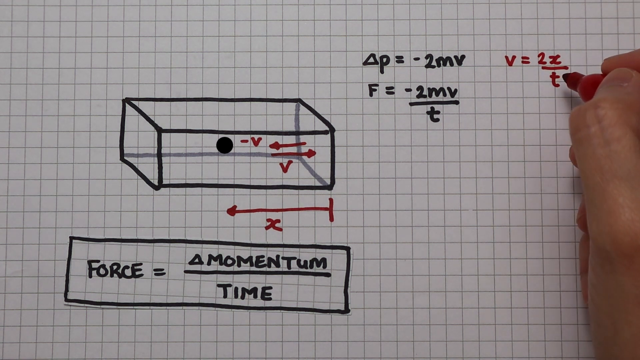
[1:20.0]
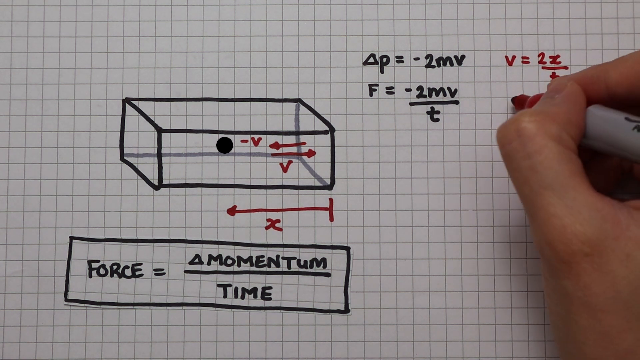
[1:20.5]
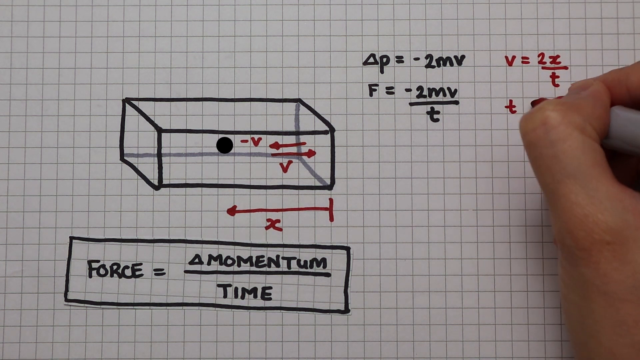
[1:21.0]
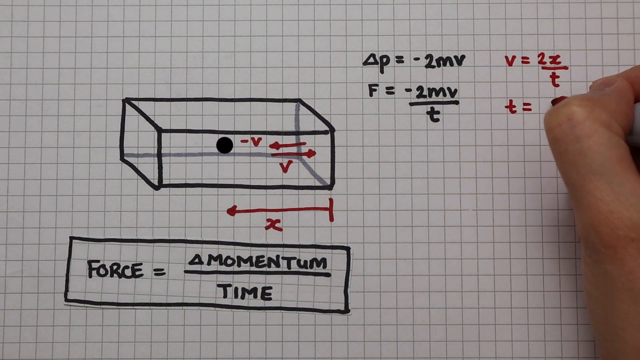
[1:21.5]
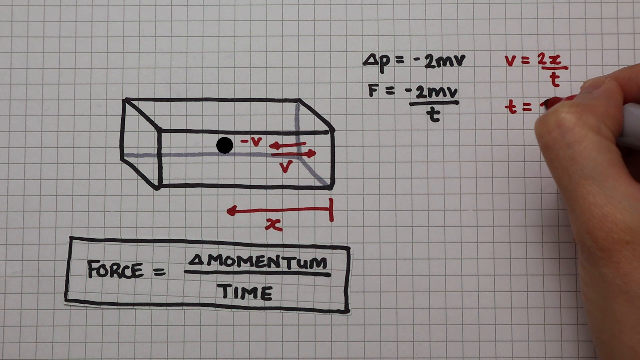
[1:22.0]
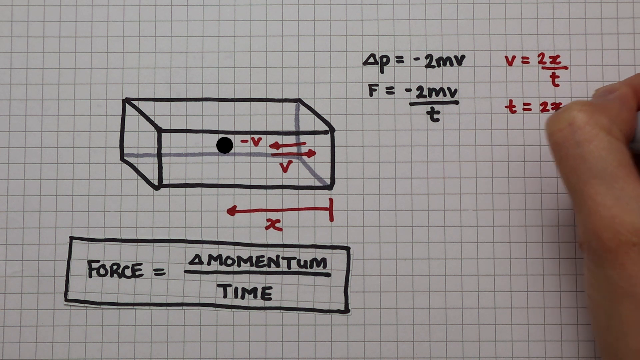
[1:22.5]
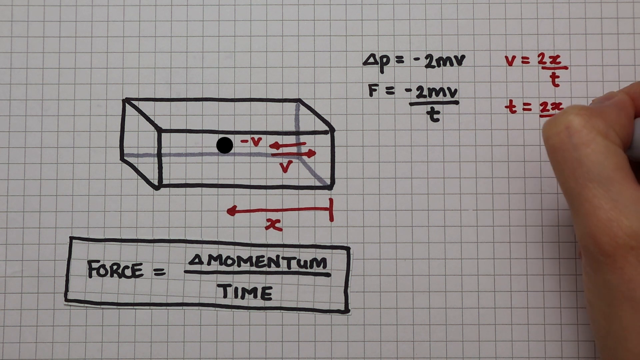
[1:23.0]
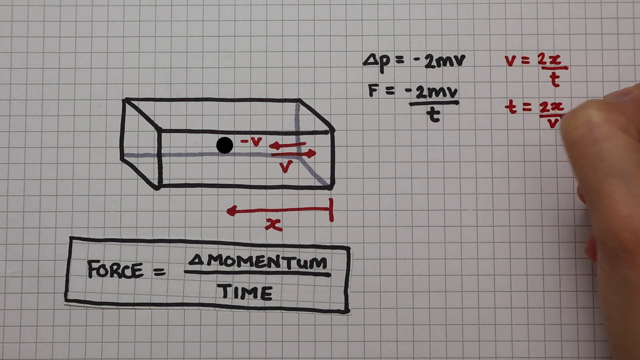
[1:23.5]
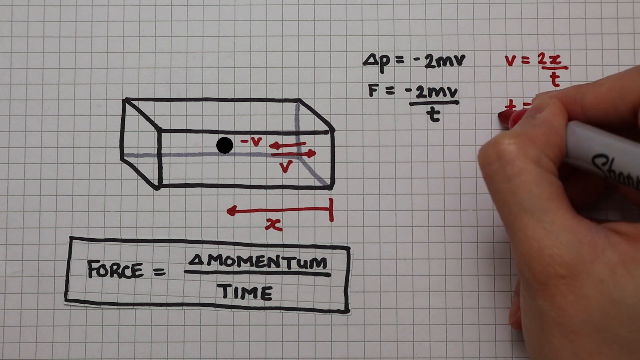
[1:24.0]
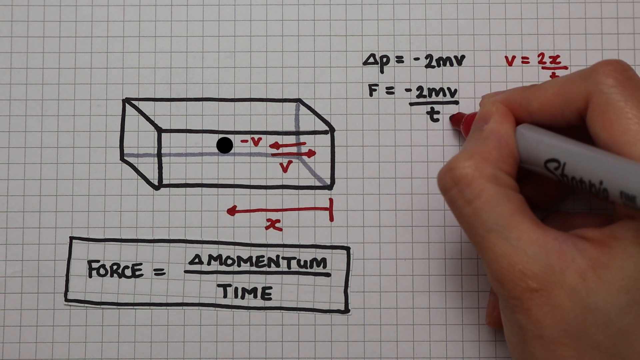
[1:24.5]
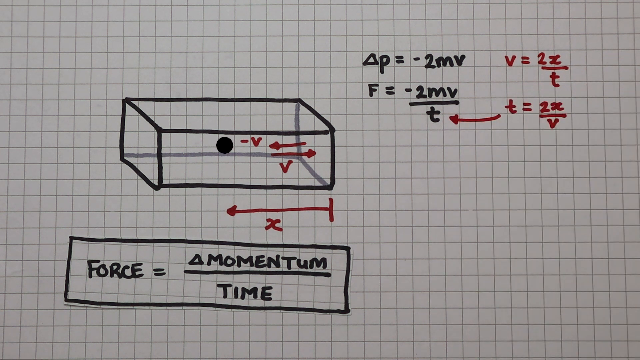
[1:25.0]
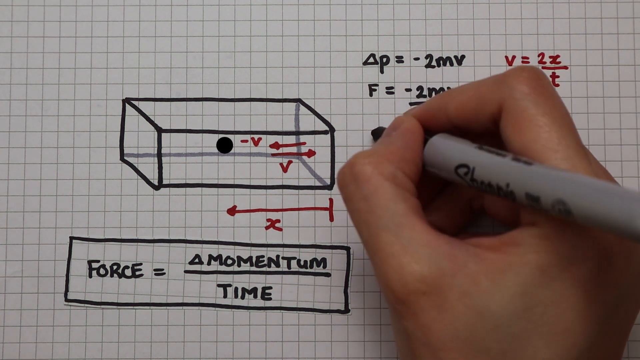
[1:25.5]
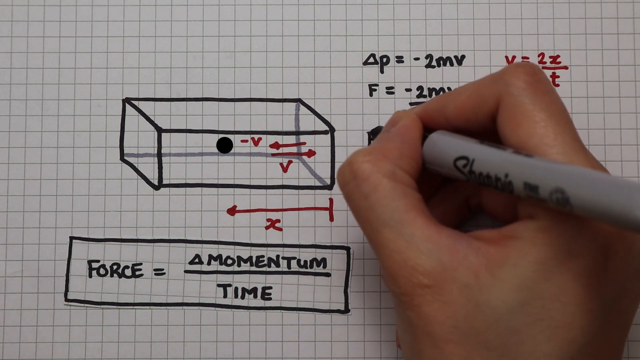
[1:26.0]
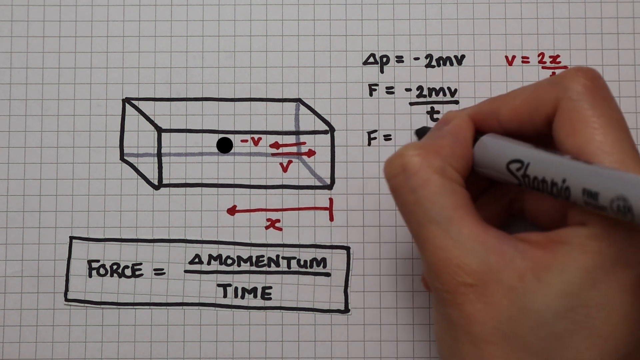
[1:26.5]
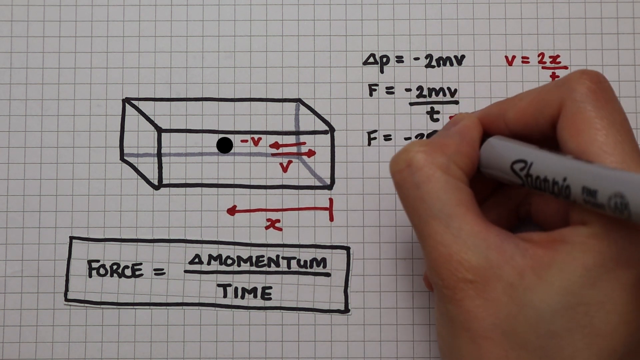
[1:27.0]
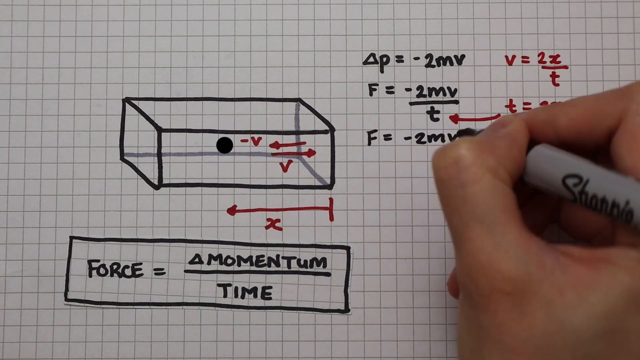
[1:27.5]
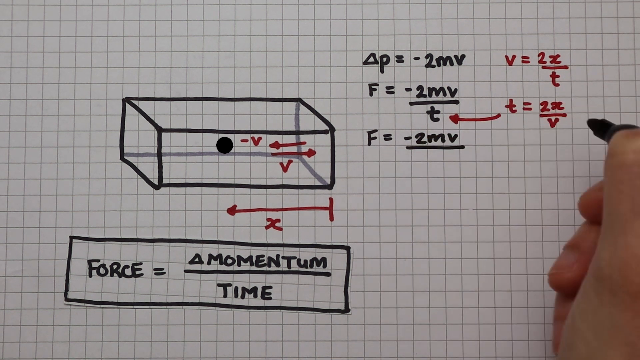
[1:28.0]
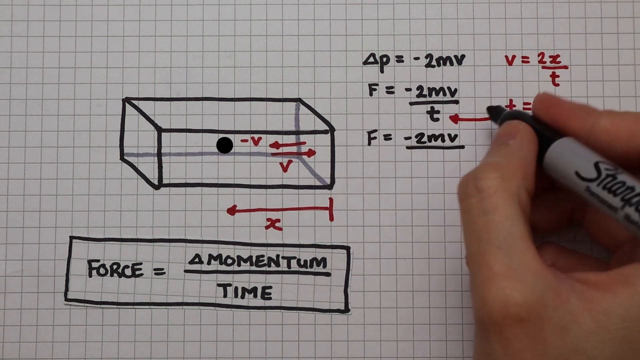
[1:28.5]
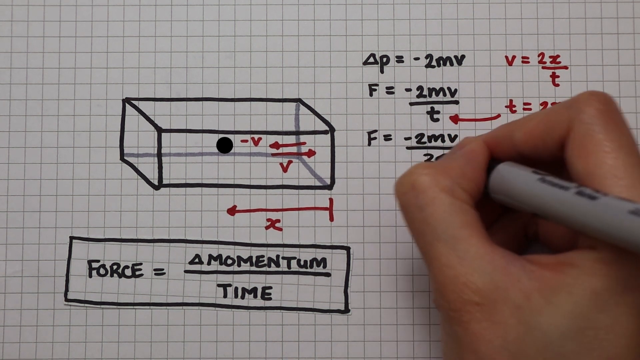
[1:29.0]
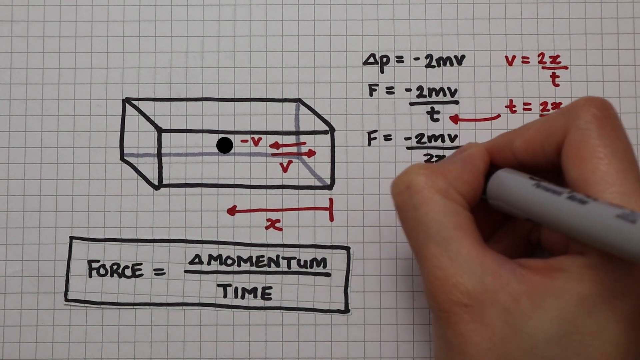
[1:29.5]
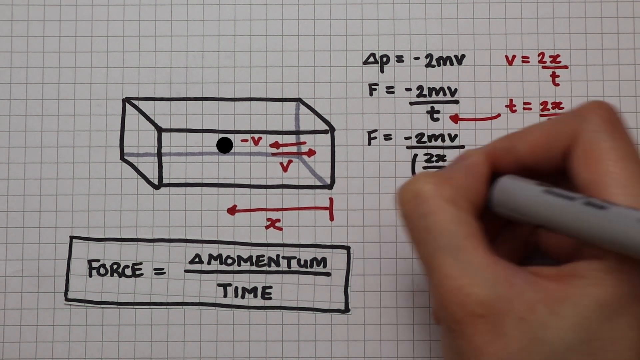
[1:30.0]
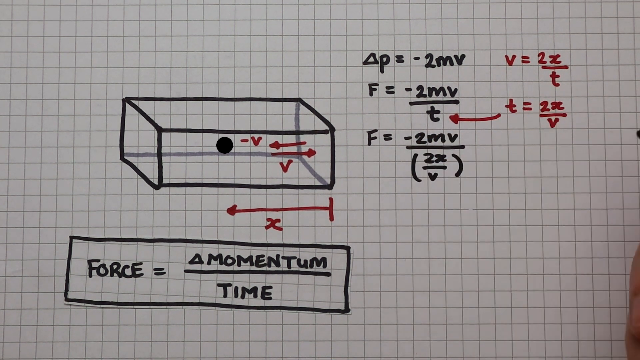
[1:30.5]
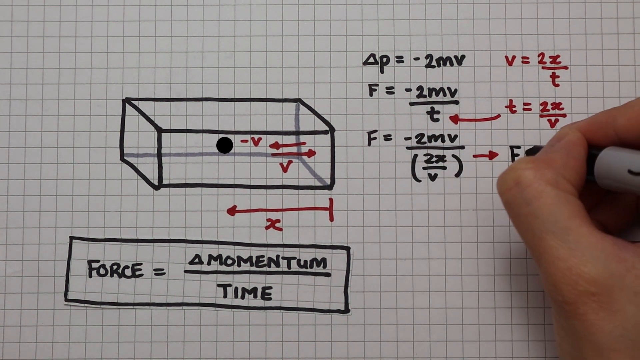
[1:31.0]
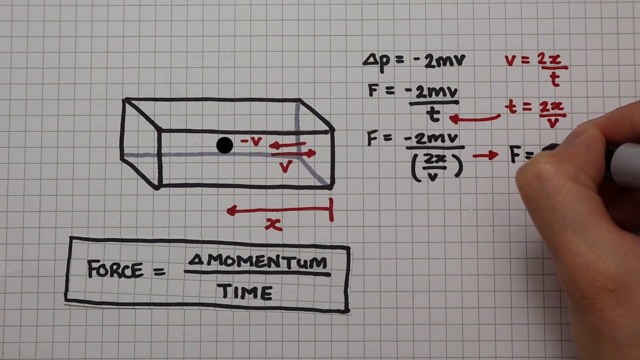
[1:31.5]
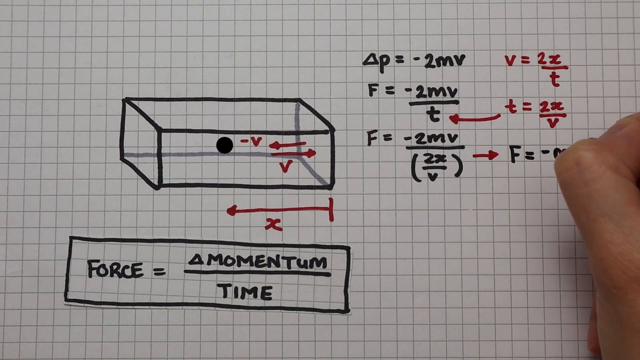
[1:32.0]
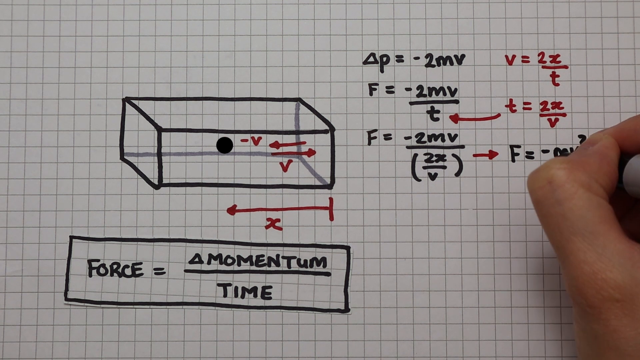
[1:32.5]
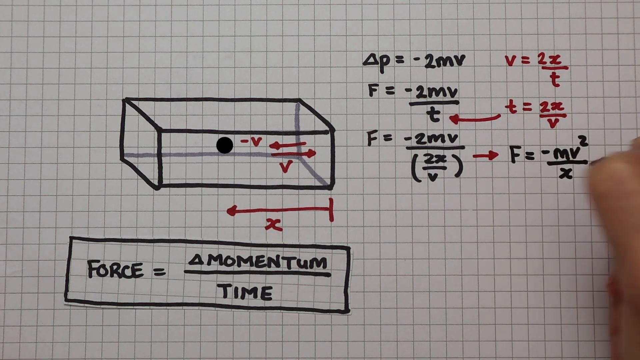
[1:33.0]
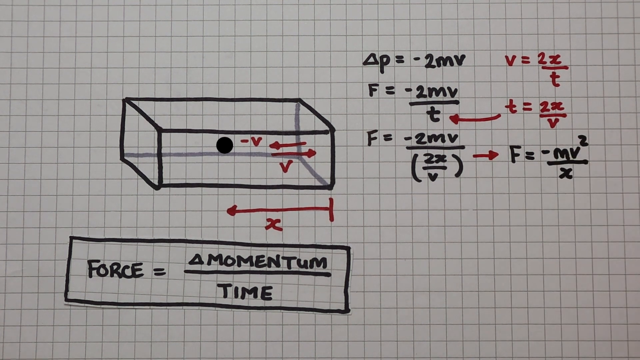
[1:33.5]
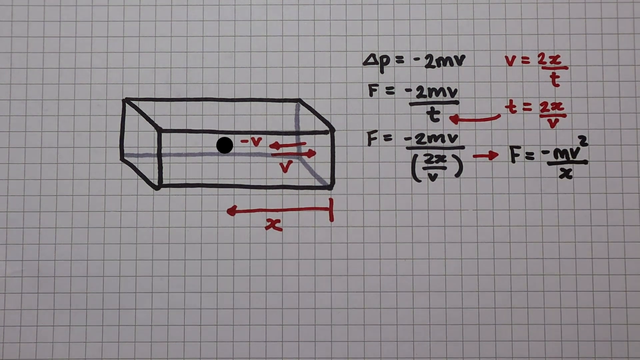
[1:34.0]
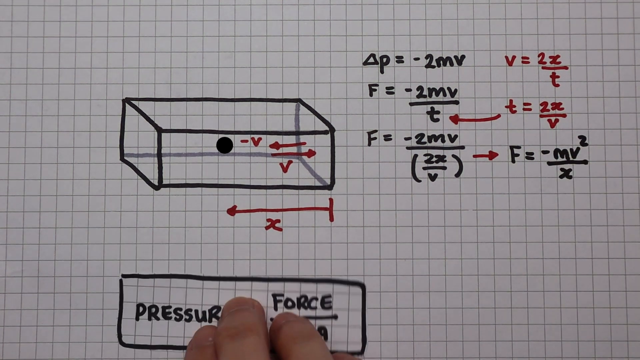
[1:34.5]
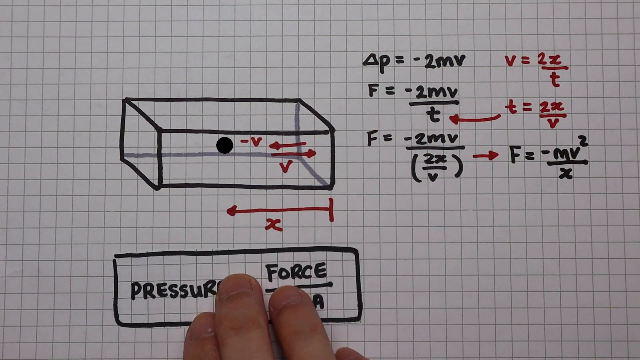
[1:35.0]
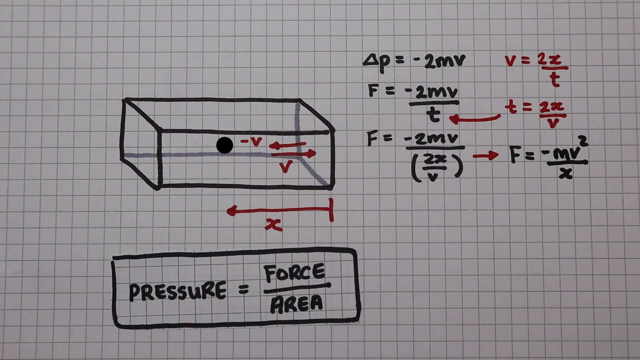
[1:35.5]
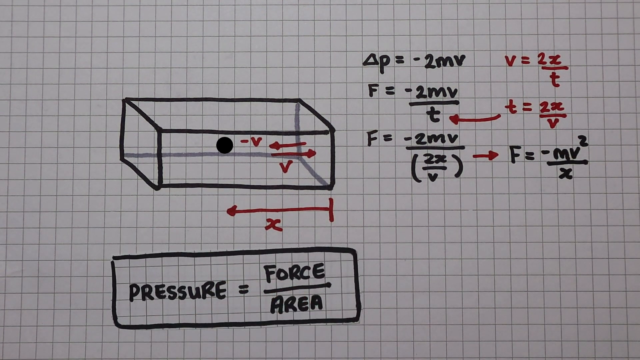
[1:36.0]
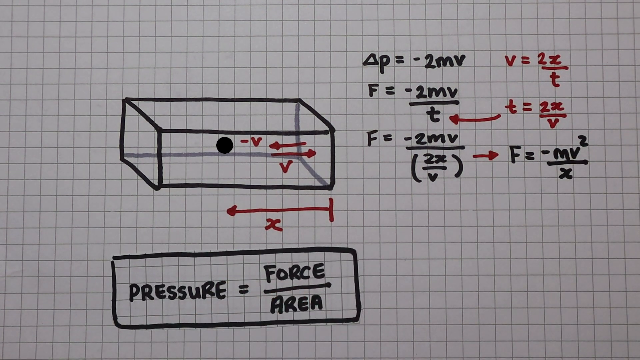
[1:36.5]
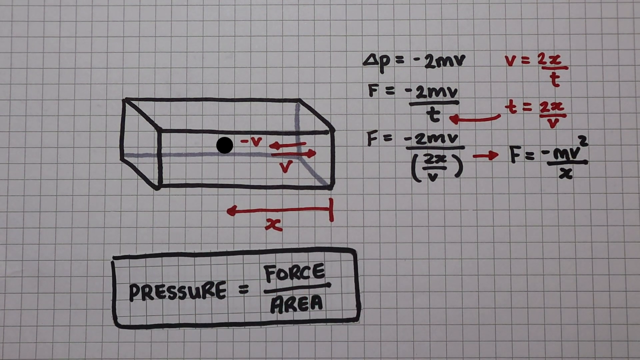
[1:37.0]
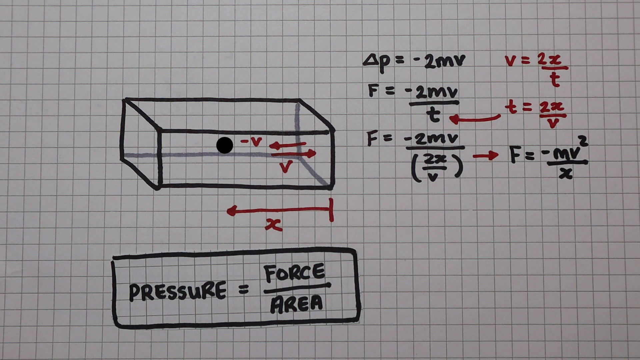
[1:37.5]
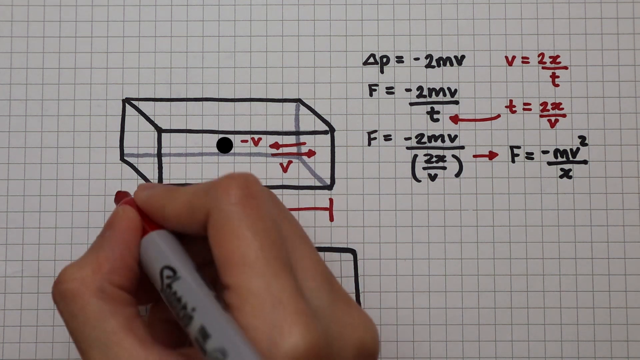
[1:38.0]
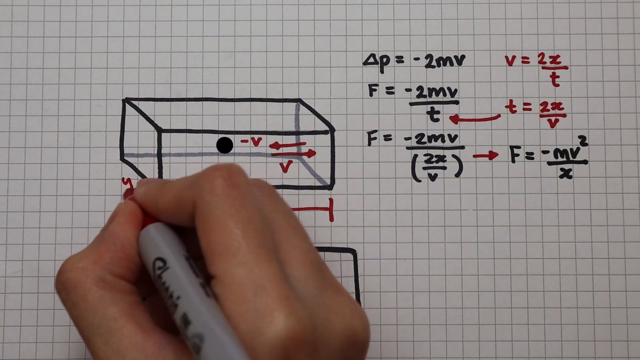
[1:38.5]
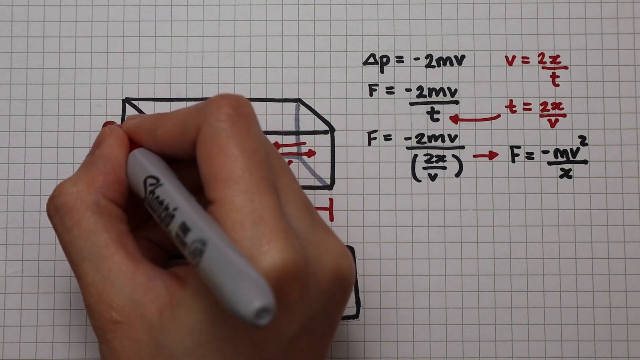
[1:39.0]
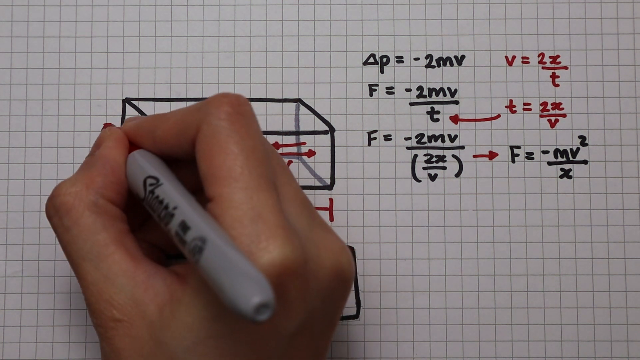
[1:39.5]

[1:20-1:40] The right hand writes equations in the right corner of the paper, including "T = 2X over V" beneath an earlier line. A semicircle with an arrow at the end is drawn pointing between the equations. Using a black marker, the hand writes further force equations, with part in parentheses, and a red line is drawn from left to right. The hand points at the equations while writing very fast in small letters that almost fit inside the very small grid boxes. The hand then comes back from the bottom of the page up to the top with the rectangular box reading "pressure equal force over area", pushing that box up.